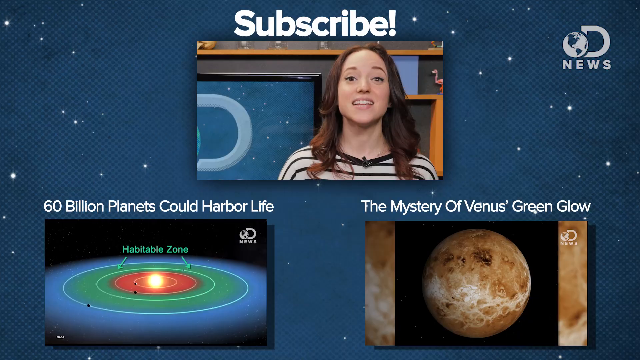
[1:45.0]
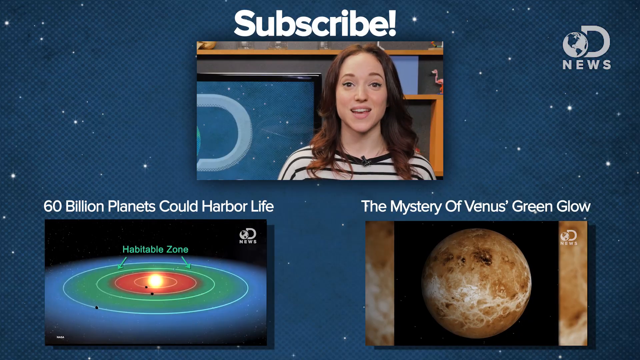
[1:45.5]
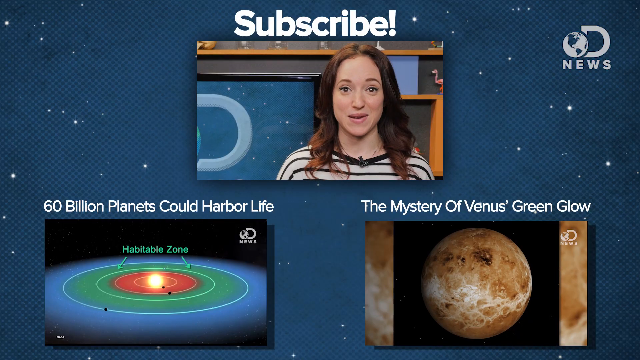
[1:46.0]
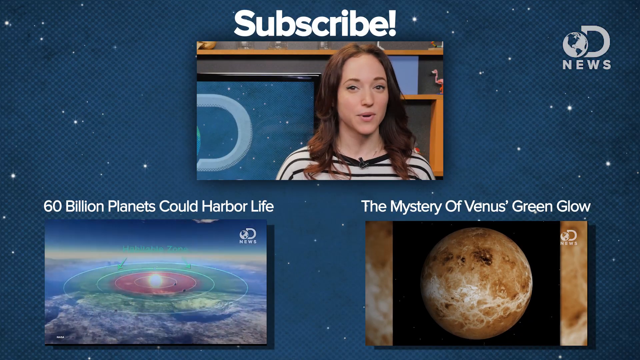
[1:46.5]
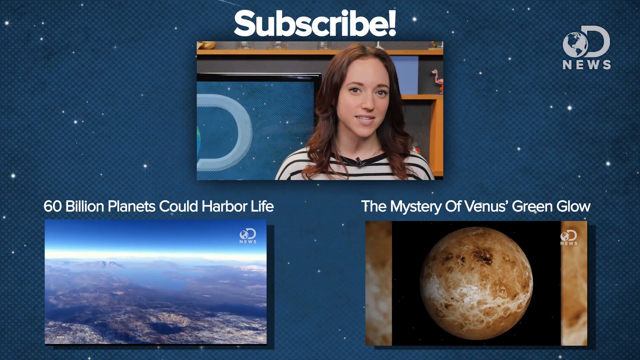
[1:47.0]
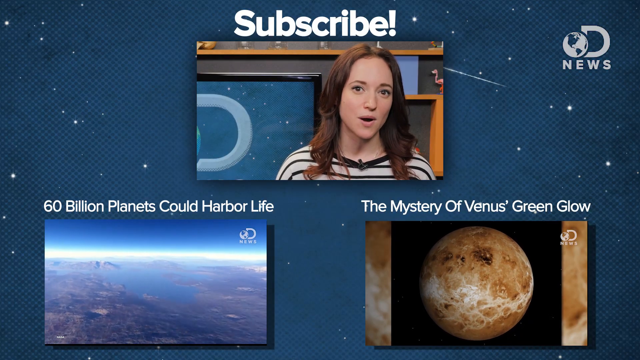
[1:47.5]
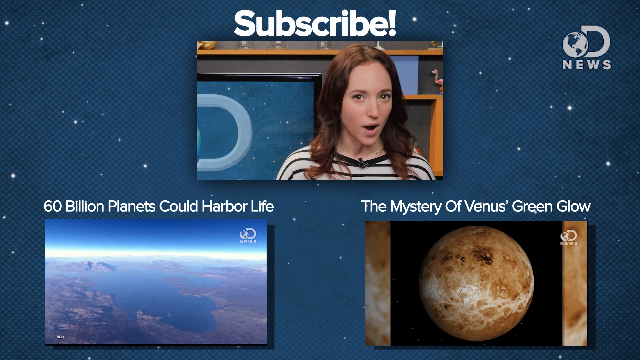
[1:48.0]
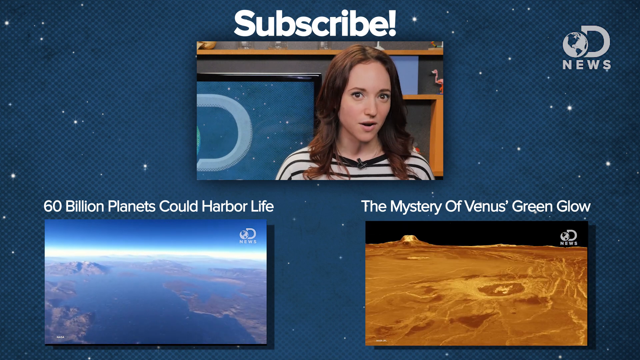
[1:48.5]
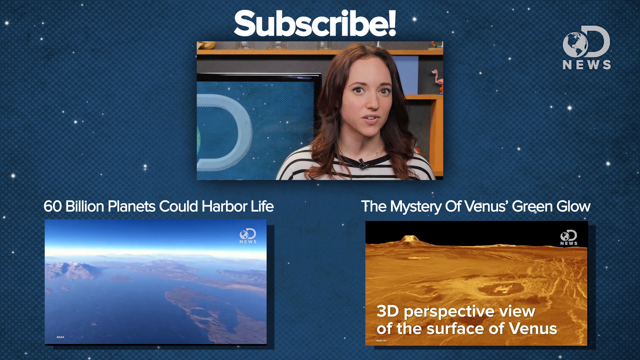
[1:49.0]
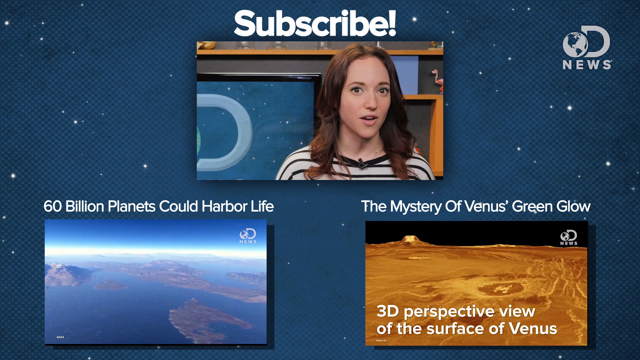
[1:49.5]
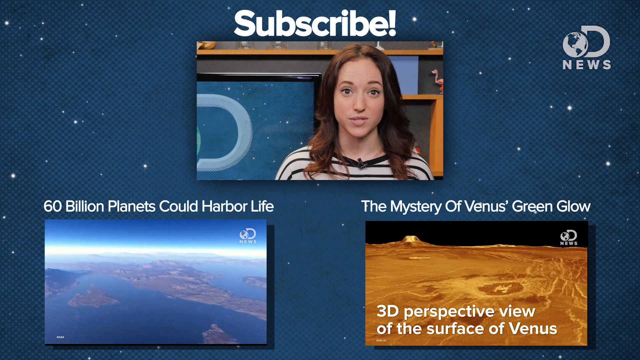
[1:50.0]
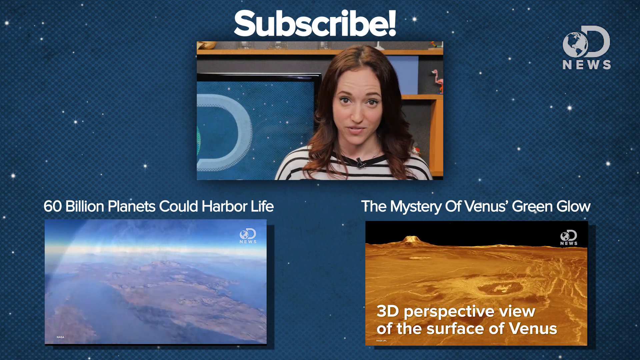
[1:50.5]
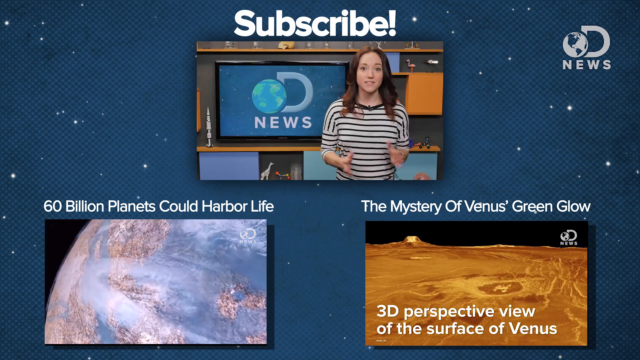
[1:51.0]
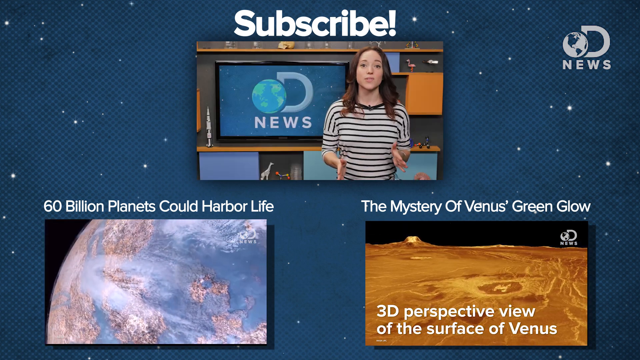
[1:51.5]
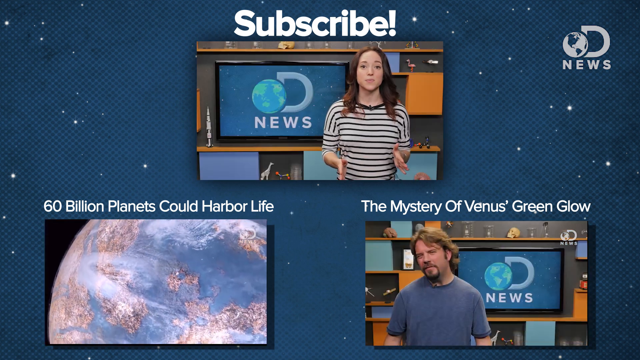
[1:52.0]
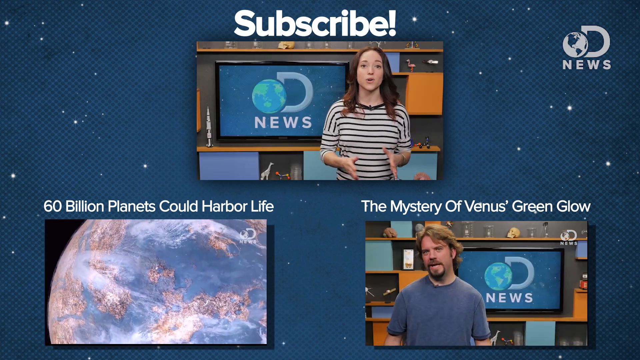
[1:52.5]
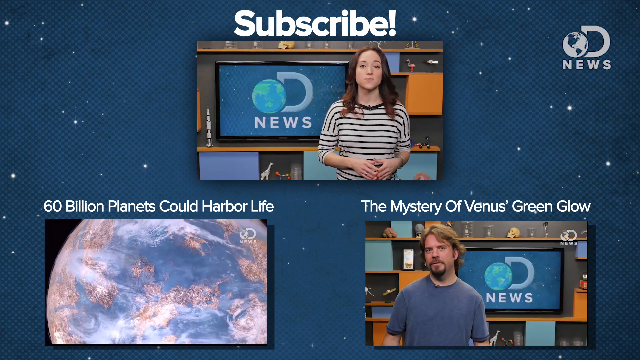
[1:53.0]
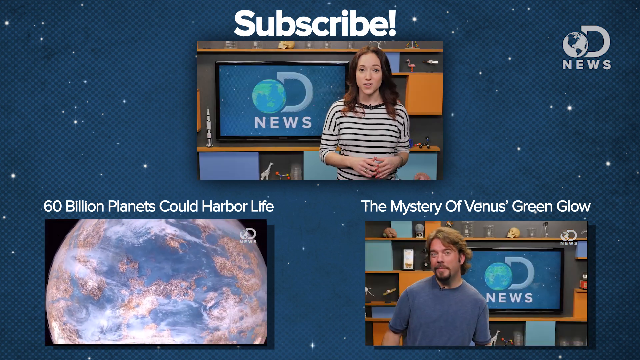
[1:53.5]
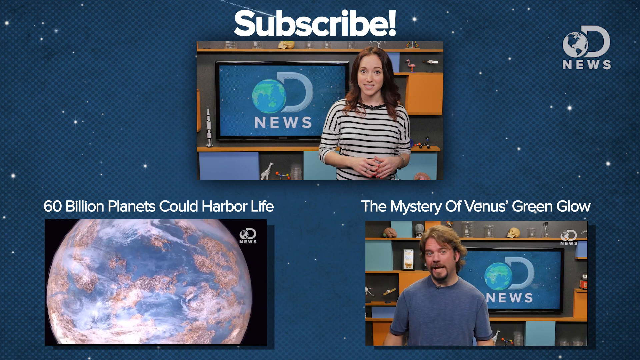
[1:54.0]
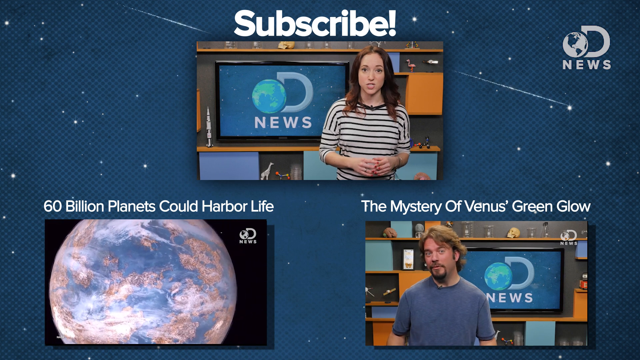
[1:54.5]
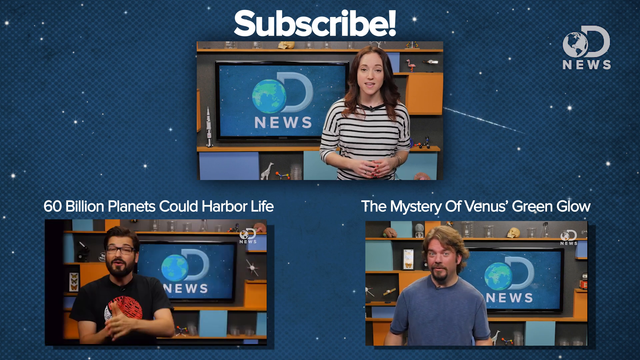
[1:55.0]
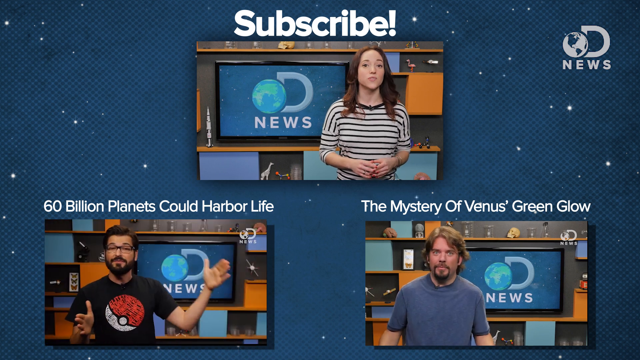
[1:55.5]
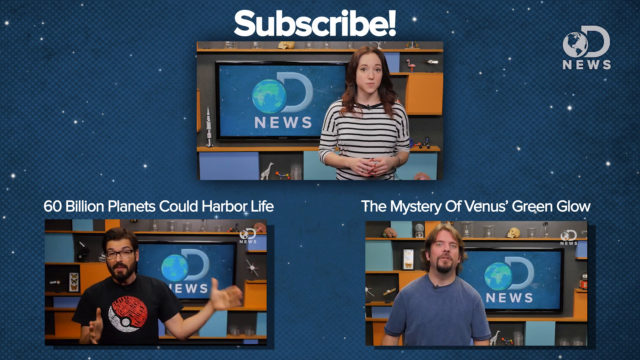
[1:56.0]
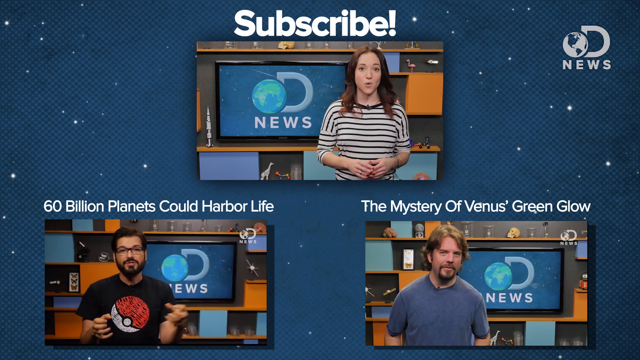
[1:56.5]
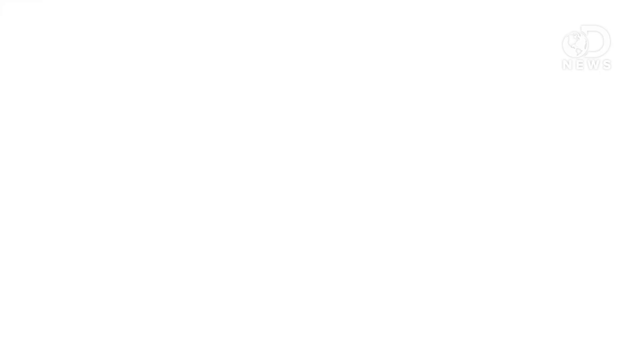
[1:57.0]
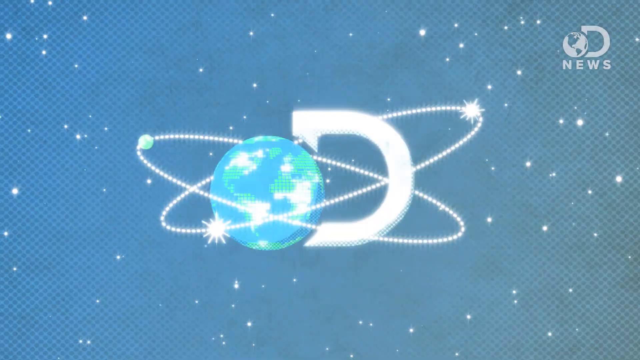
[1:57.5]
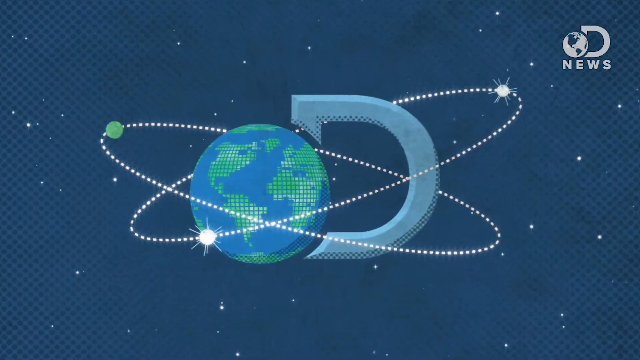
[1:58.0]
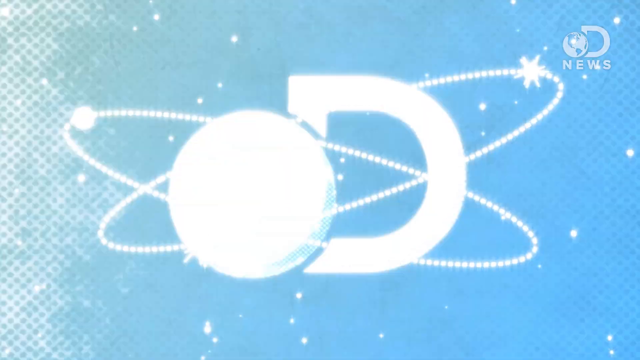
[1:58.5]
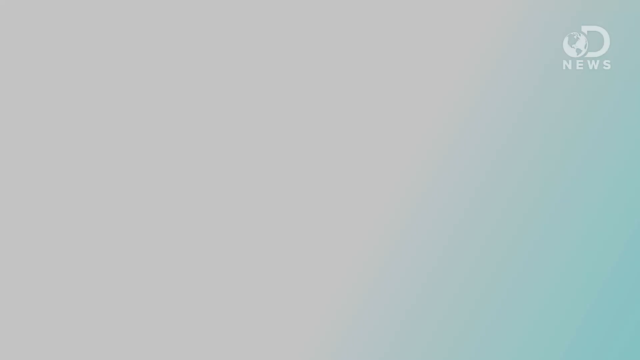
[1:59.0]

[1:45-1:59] An end screen shows three small thumbnail video scenes. At the top is the presenter, speaking against the same backdrop as before, with "Subscribe!" above her. Of the other two screens, the left one says "60 Billion Planets Could Harbor Life" and the right one says "The Mystery of Venus' Green Glow," and on the video pane itself it says "3D perspective view of the surface of Venus." As she continues to speak, the images in the other two screens shift to other presenters. On the left is a male presenter in front of the same backdrop, wearing a black t-shirt with a red and white Pokeball illustration on the front; he has dark hair, glasses, and a beard. On the right is a male speaker in front of the same backdrop wearing a light blue t-shirt; he has reddish-brown hair and a beard. Behind all three video scenes is a light blue backdrop with what looks like stars in it. The DNews logo is in the upper right corner, and "subscribe" is in the lower right corner.